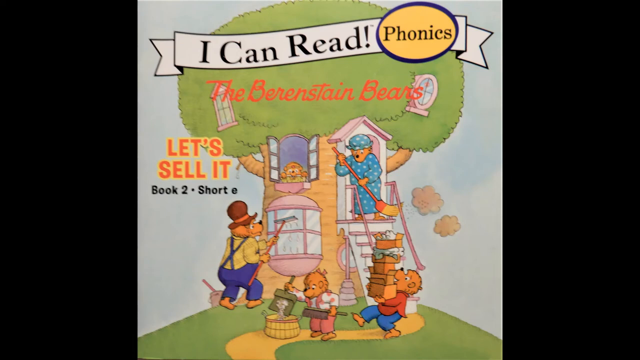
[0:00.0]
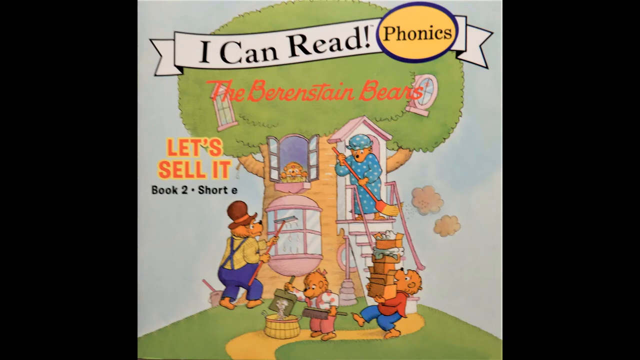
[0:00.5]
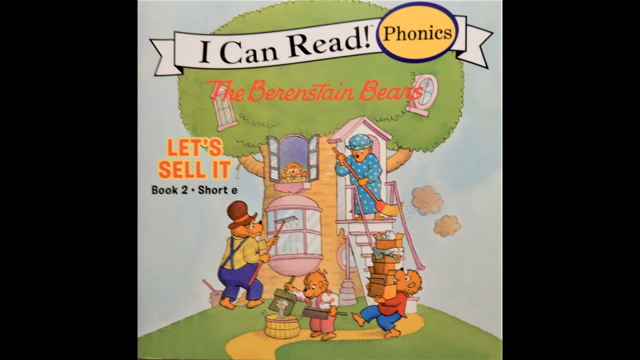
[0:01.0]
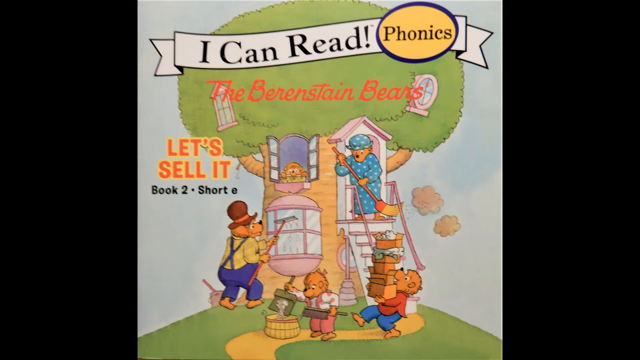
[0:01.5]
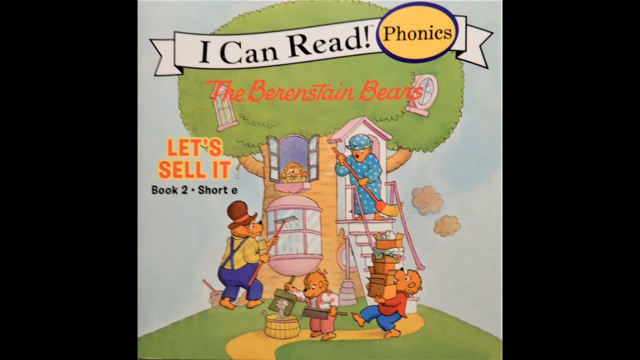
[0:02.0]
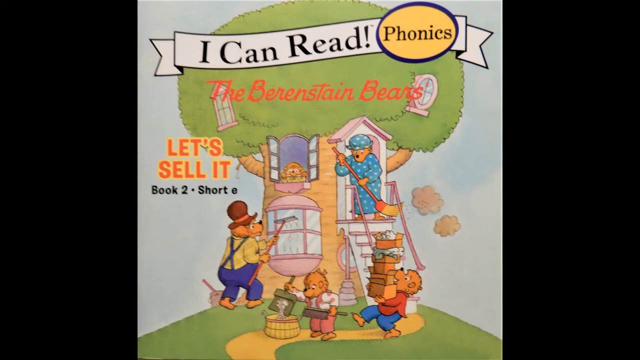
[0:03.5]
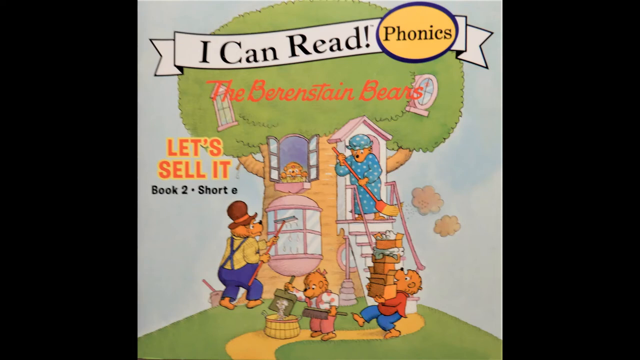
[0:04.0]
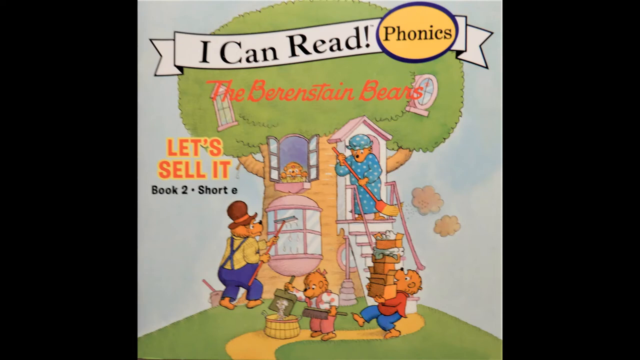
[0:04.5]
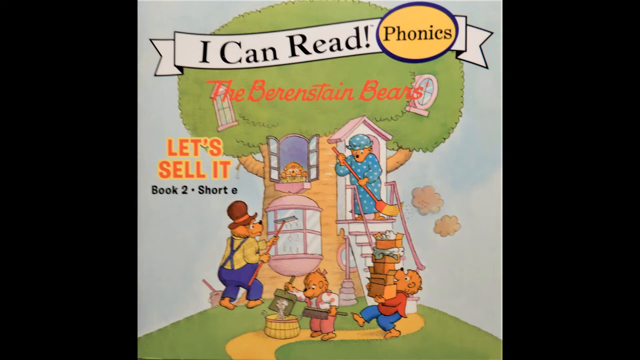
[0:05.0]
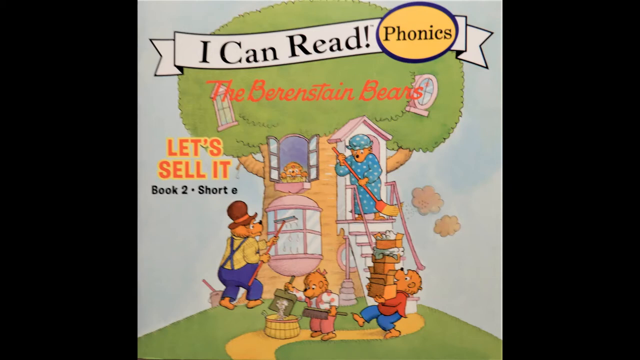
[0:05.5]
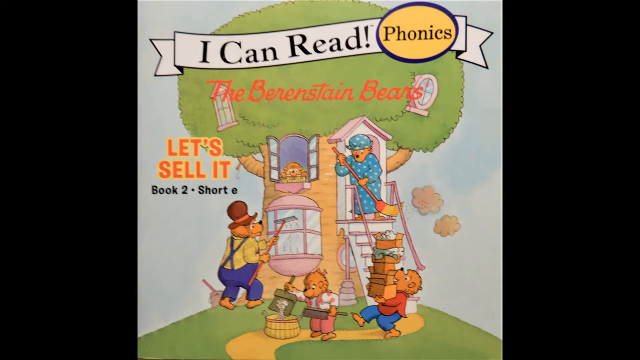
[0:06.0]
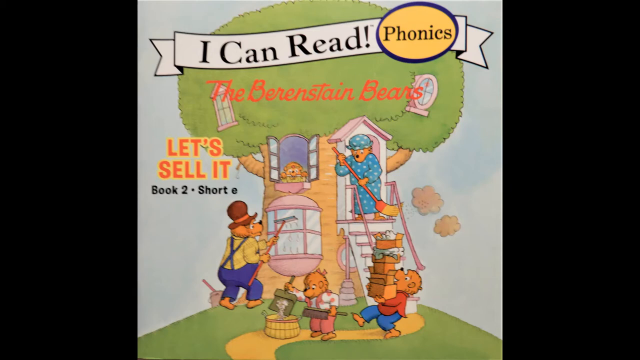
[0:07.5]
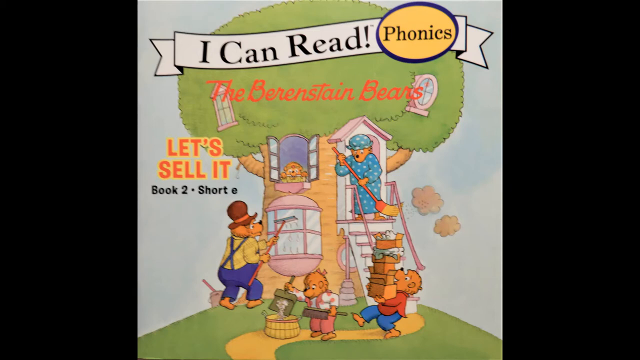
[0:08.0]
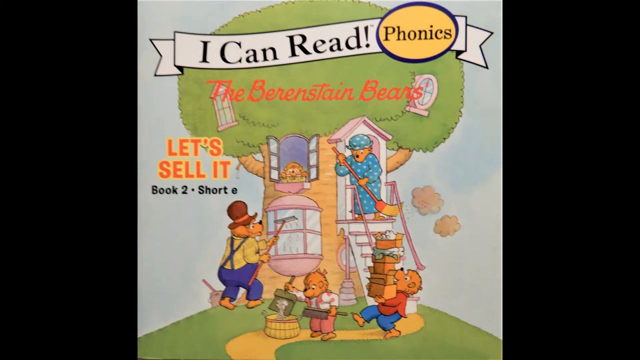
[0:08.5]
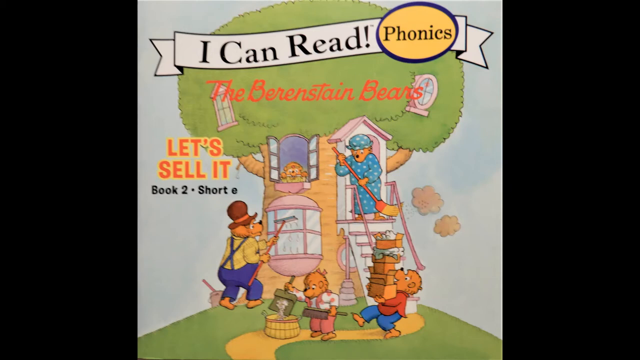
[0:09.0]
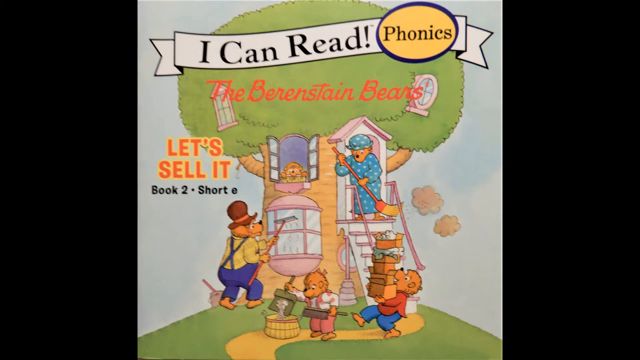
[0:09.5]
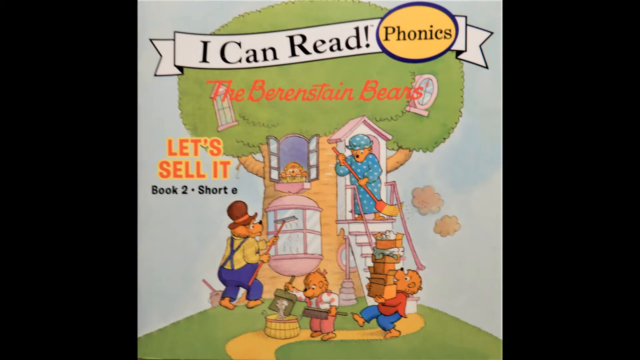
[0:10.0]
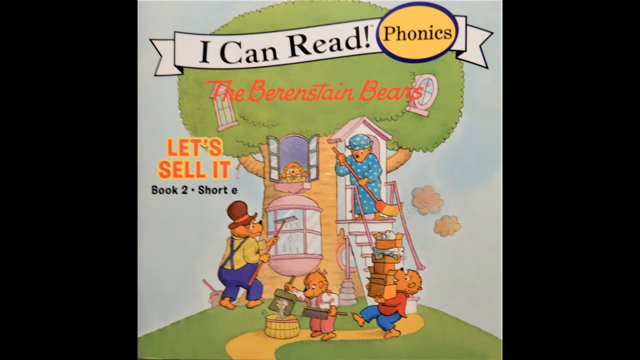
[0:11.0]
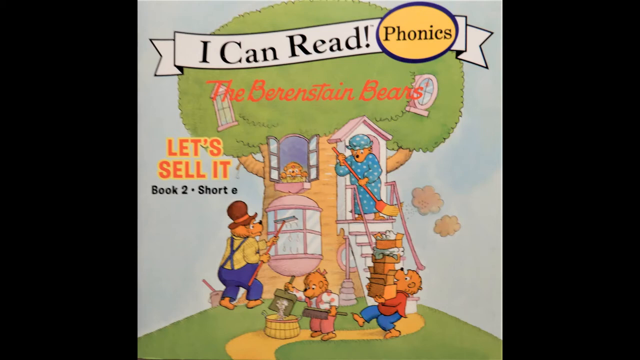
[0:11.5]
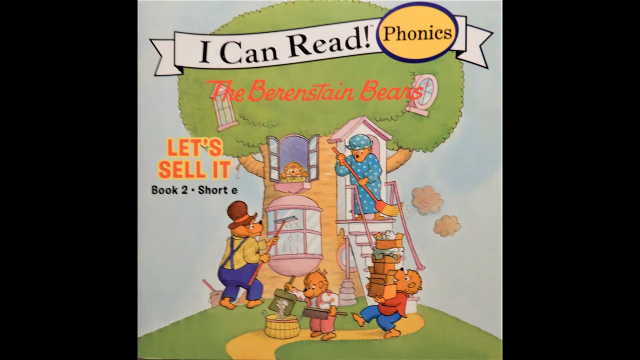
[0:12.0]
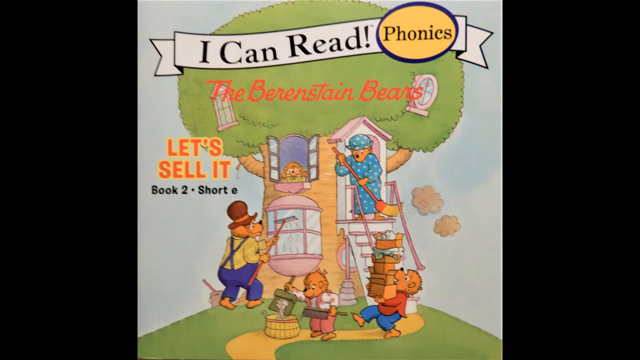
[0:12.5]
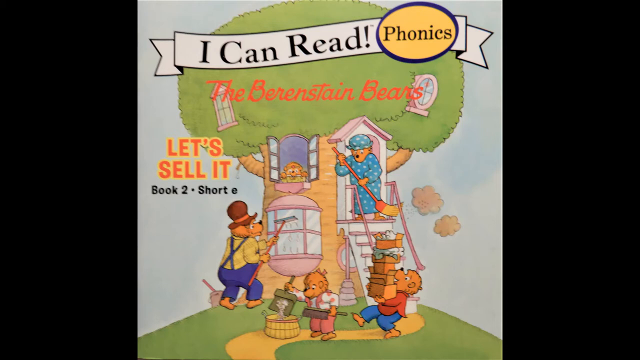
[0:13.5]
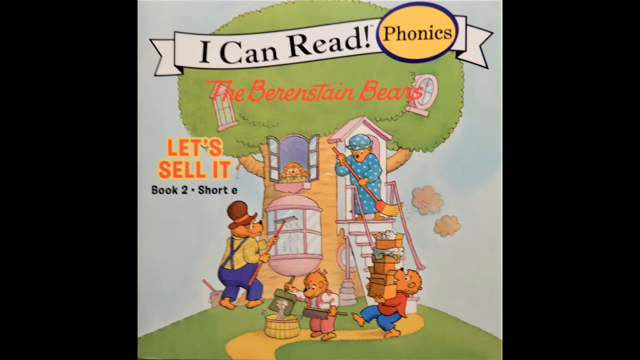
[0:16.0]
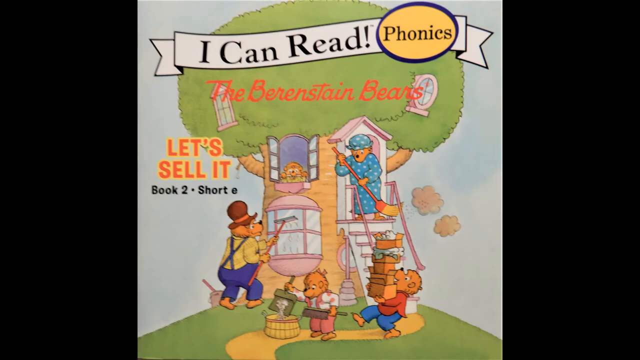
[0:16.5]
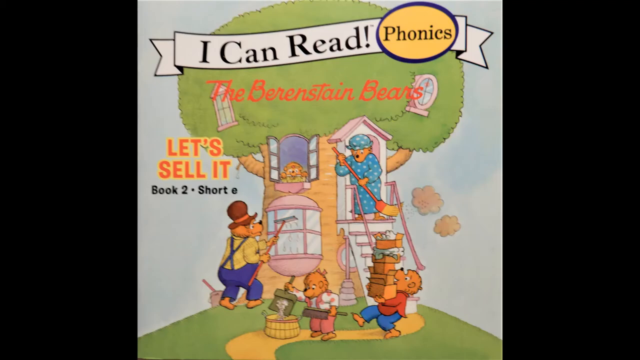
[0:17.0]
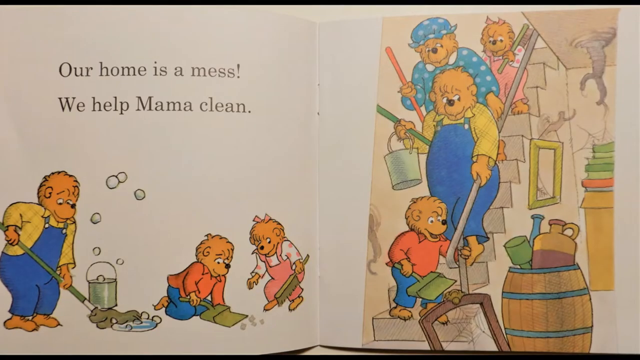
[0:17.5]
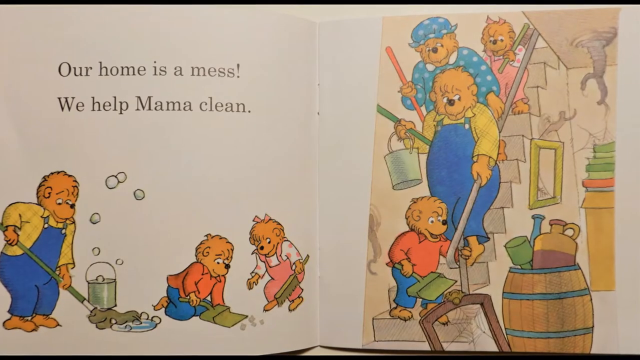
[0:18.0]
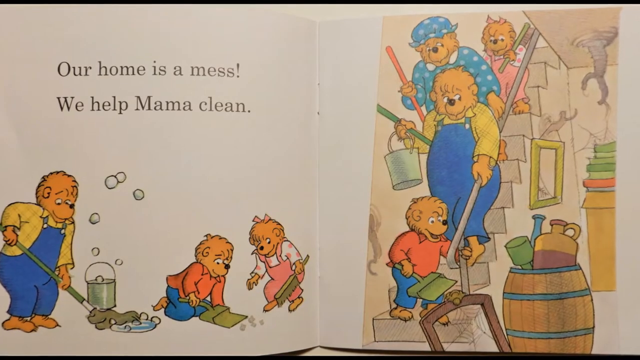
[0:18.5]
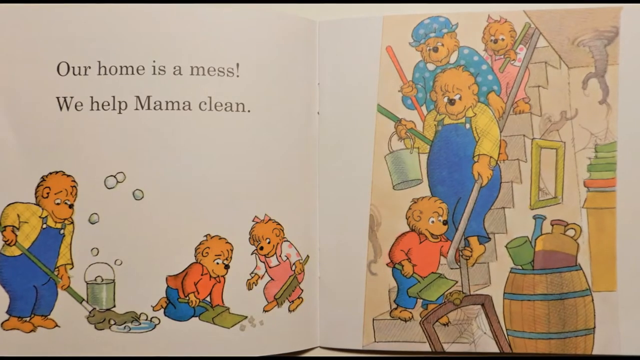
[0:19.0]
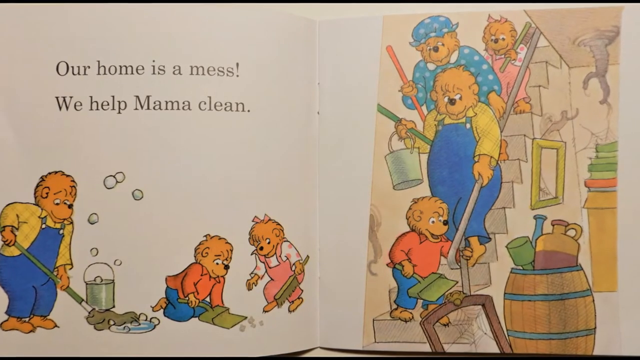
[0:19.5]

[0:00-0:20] The video opens on an image of the Berenstain Bears that looks like a book cover, shown in a square with black bars on the left and right sides of the screen. Within the cover, everyone in the family is doing something different: the boy is carrying a bunch of boxes, the girl is cleaning up, the father is cleaning the windows, and the mother is sweeping the floor. There is also a baby in the window inside their tree. The cover stays on screen until it fades to an image of the inside of the book. The left side has a white background with some text at the top left, and at the bottom the family is cleaning up on the floor. On the right side of the page, they are walking downstairs to clean up the basement, which looks dirty, cracked and old; they all appear to be on their way down to clean it, holding buckets, sweeping pans and brooms.